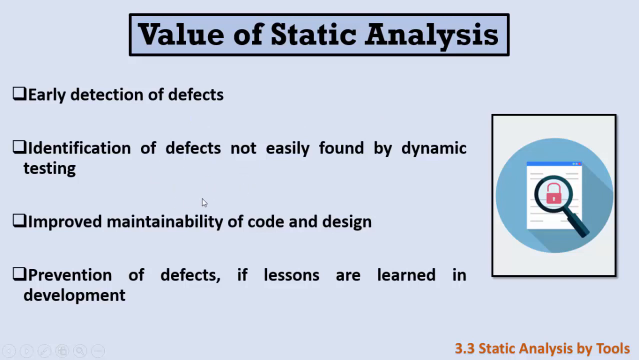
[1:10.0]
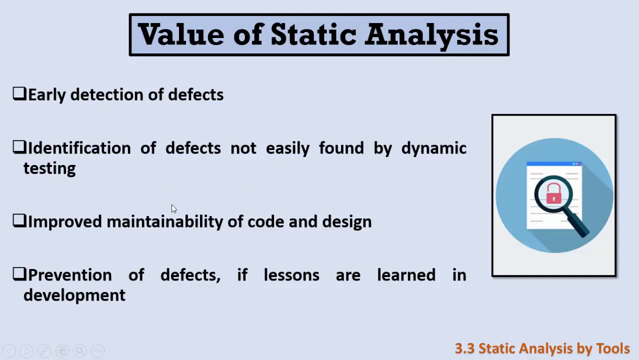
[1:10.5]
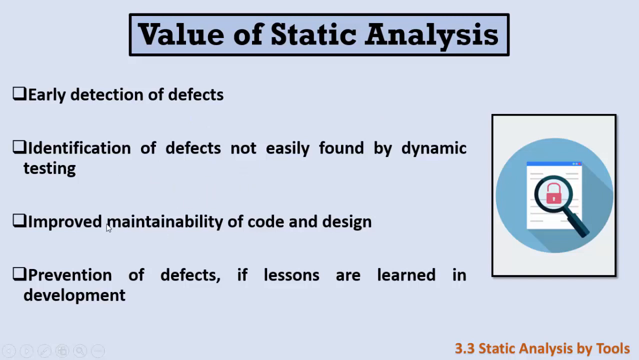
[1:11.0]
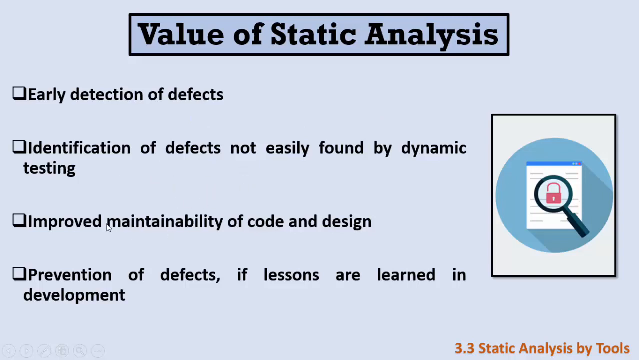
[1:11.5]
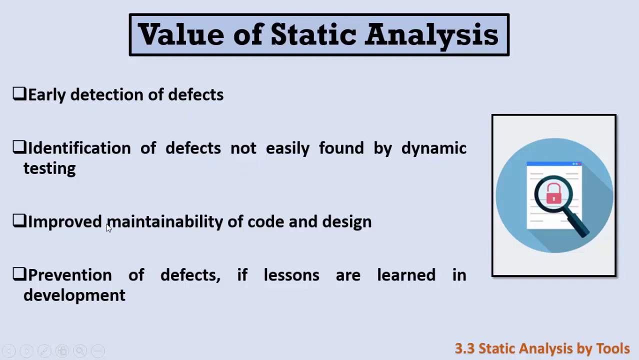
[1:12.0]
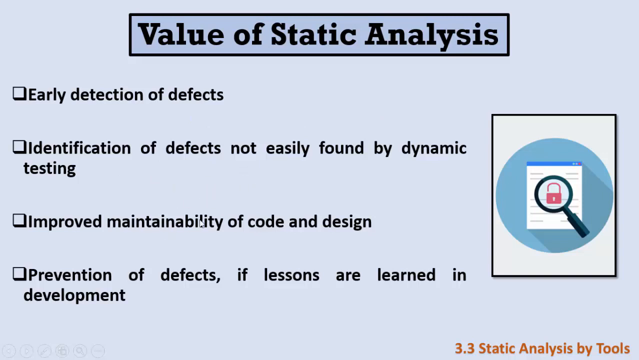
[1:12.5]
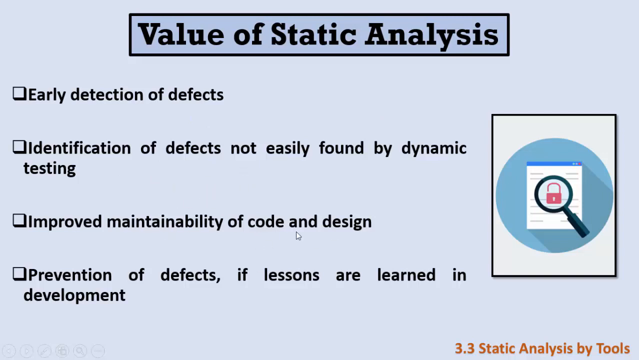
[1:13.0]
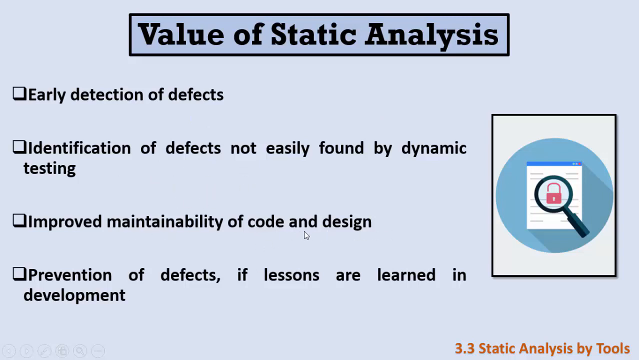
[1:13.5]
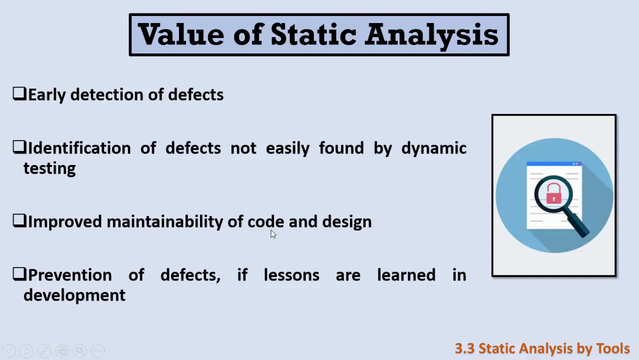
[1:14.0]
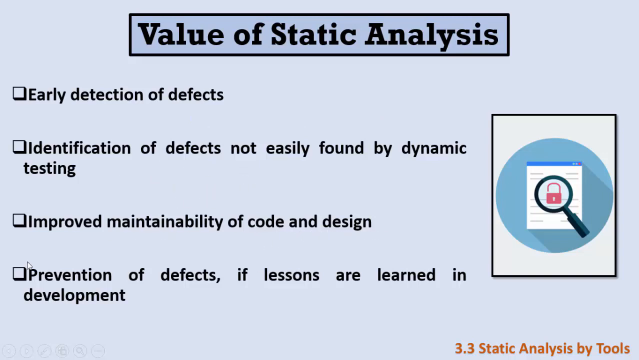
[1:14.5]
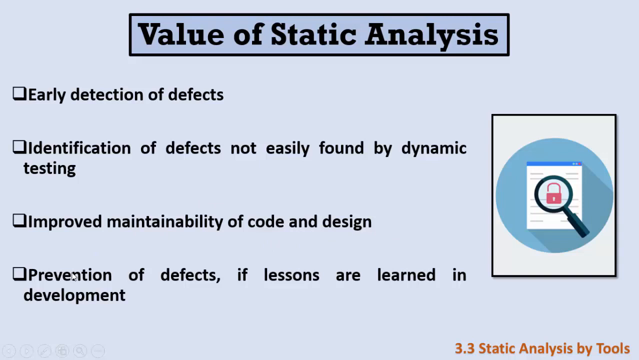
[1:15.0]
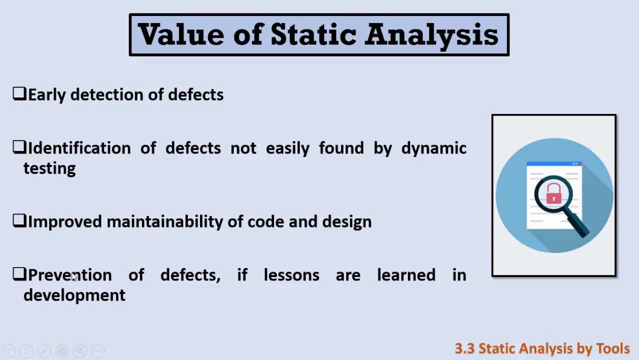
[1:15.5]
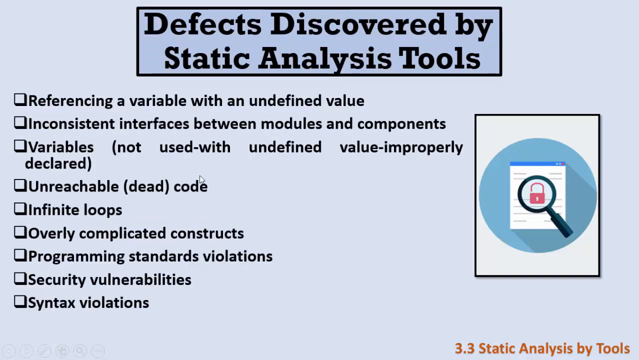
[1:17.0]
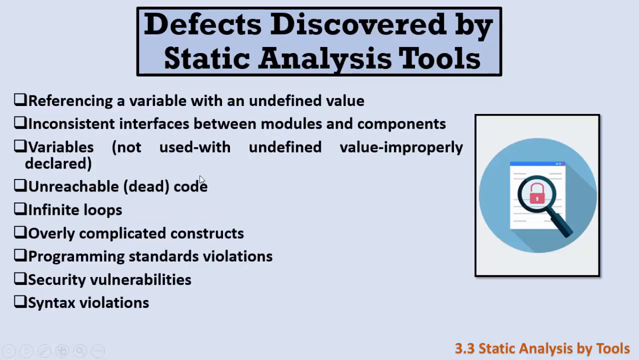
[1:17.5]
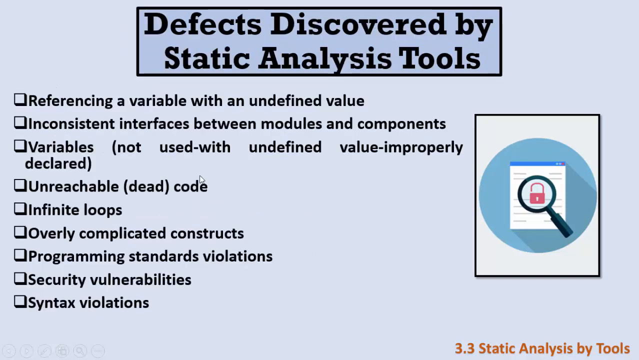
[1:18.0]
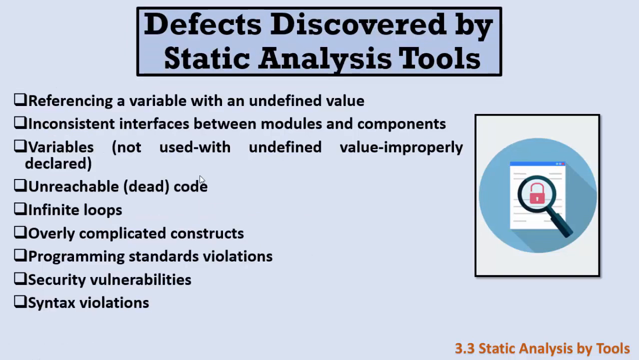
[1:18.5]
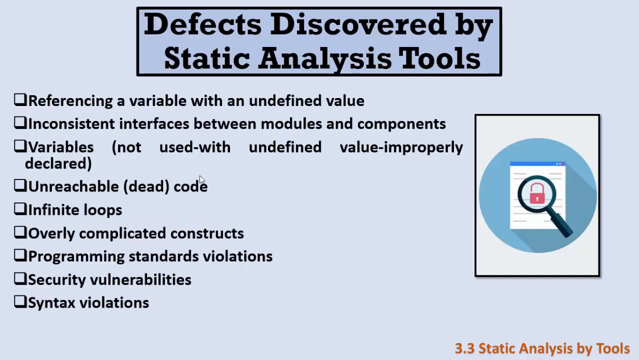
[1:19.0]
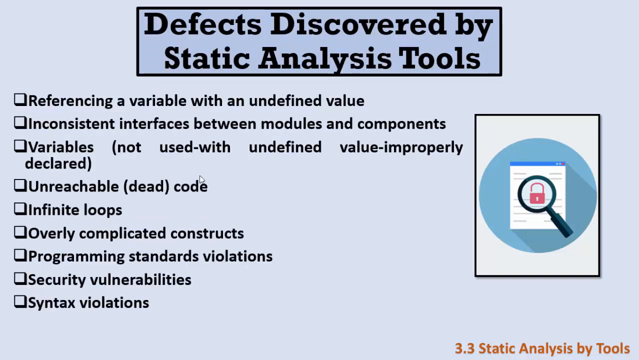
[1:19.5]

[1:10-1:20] The text stays the same for several seconds and then changes. The heading at the top reads "Defects discovered by static analysis tools", with a list underneath: "referencing a variable with an undefined value", "inconsistent interfaces between modules and components", "variables not used with undefined value improperly declared", "unreachable or dead code", "infinite loops", "overly complicated constructs", "programming standards violations", "security vulnerabilities", and "syntax violations". The points are not numbered but appear one after the other, each with a square like a checkbox to its left. On the right, the icon of the magnifying glass over a padlock remains.